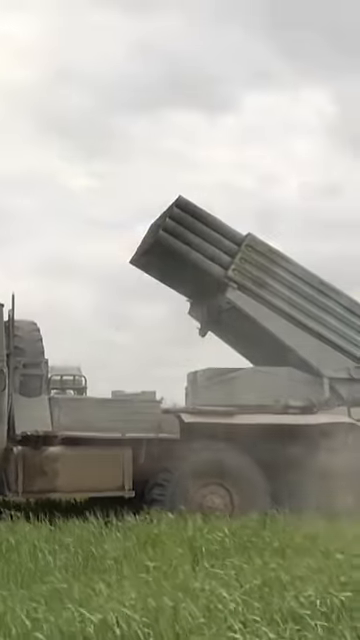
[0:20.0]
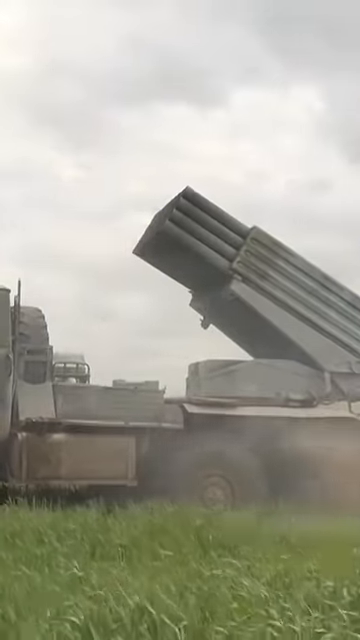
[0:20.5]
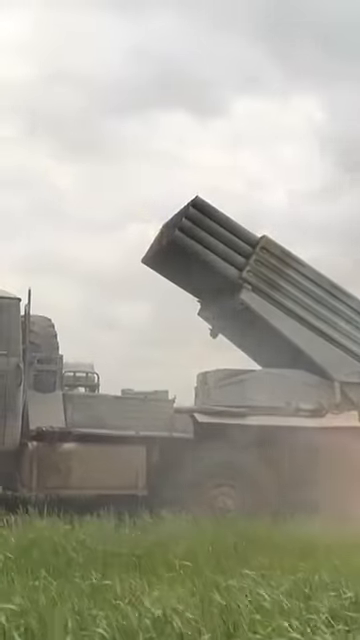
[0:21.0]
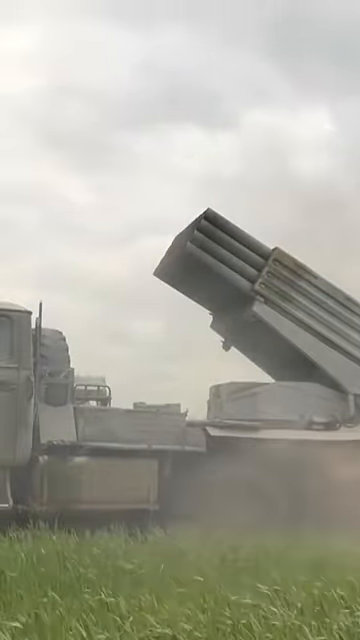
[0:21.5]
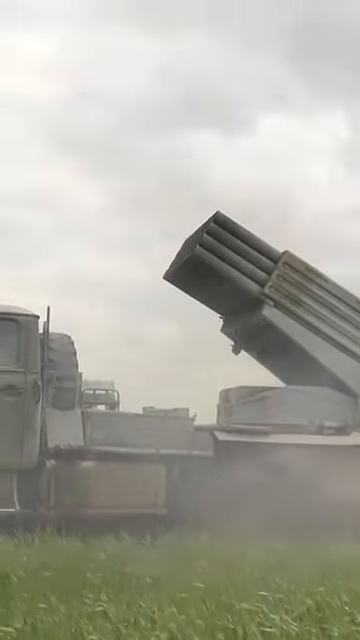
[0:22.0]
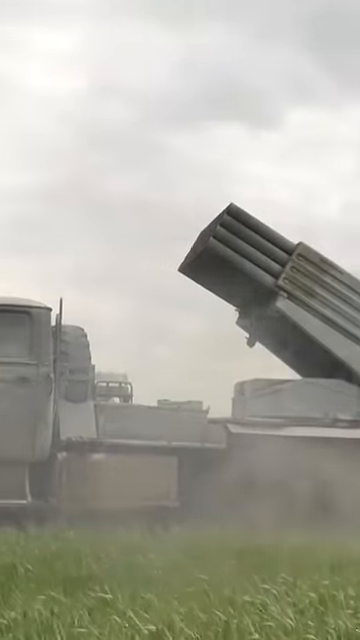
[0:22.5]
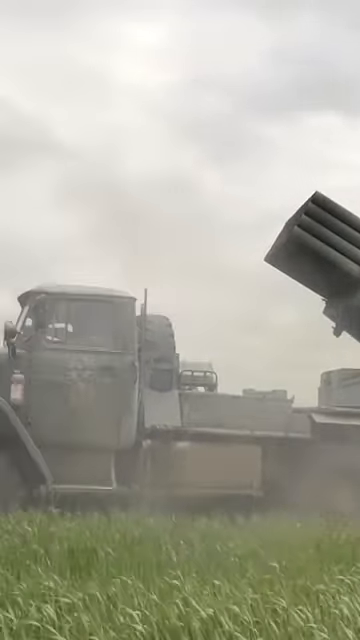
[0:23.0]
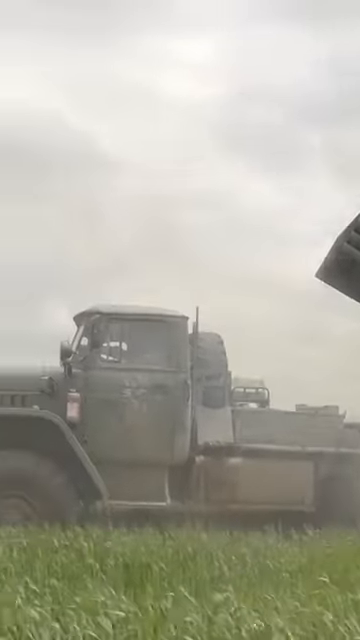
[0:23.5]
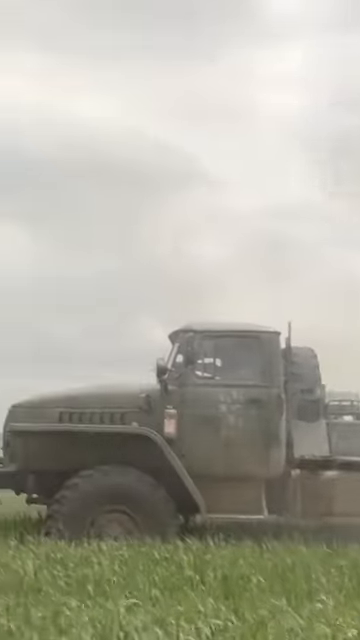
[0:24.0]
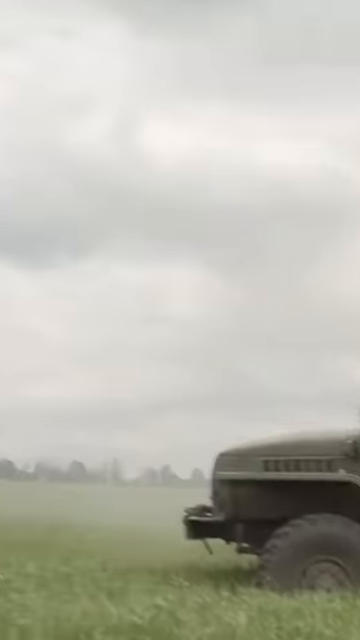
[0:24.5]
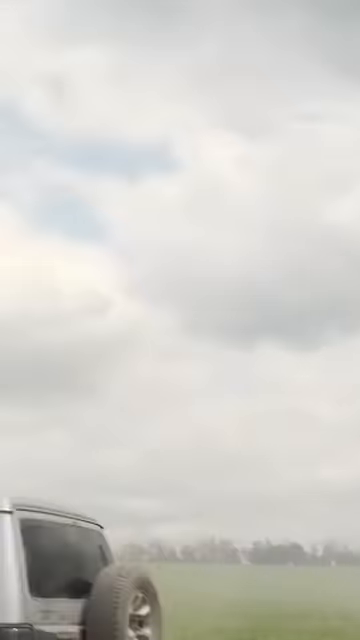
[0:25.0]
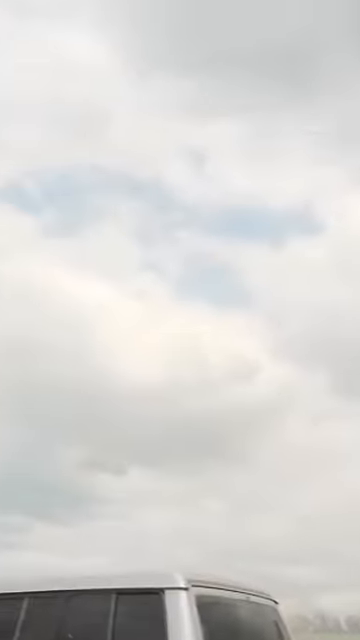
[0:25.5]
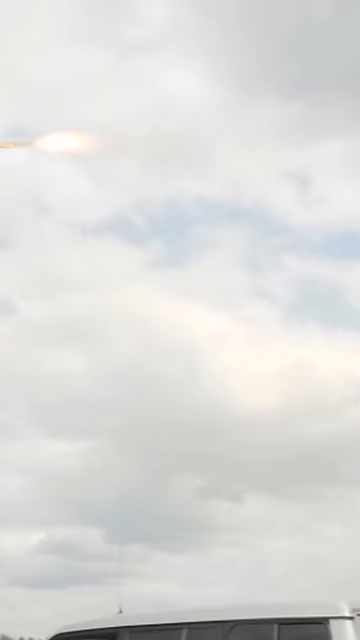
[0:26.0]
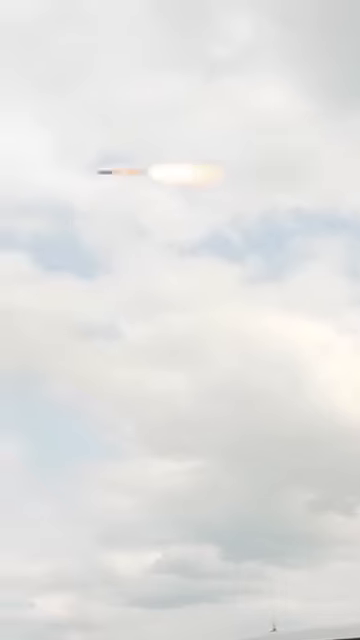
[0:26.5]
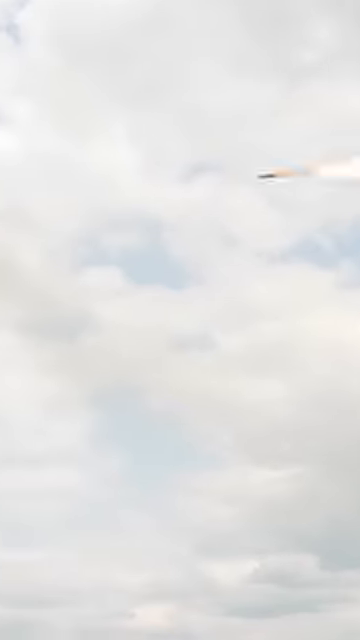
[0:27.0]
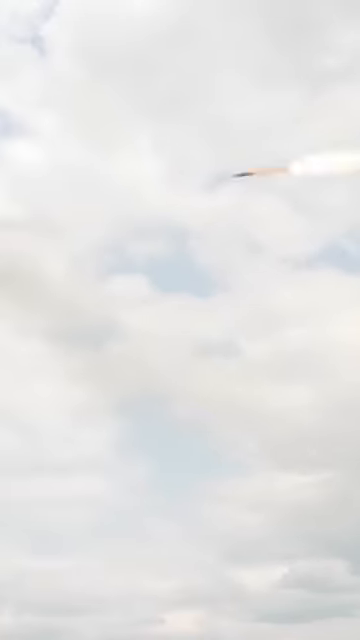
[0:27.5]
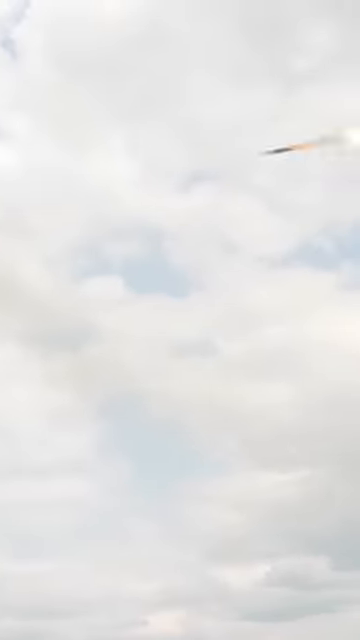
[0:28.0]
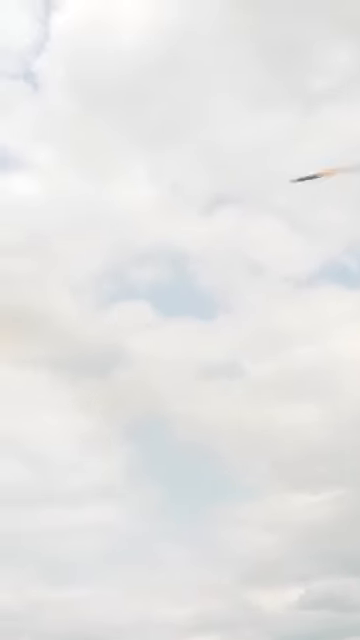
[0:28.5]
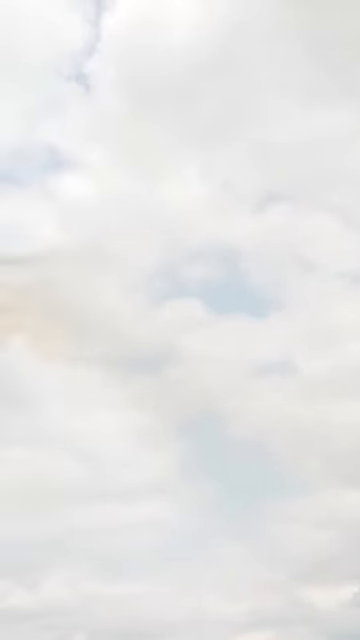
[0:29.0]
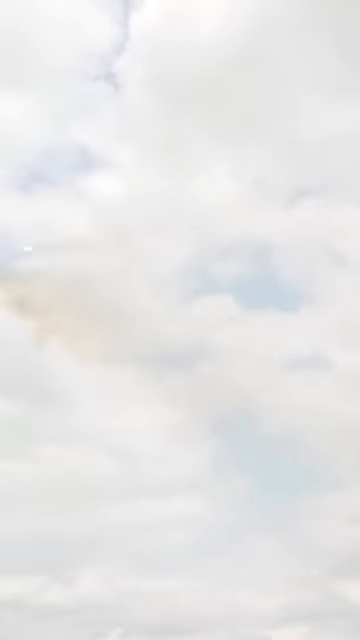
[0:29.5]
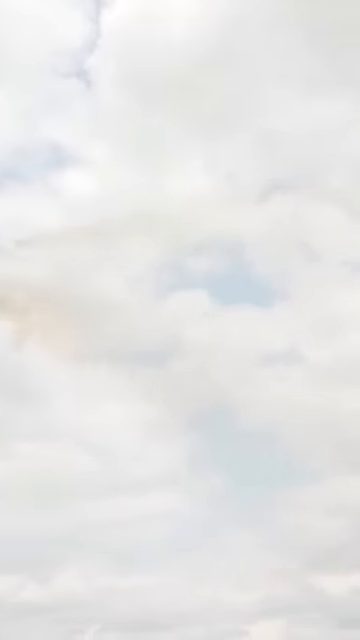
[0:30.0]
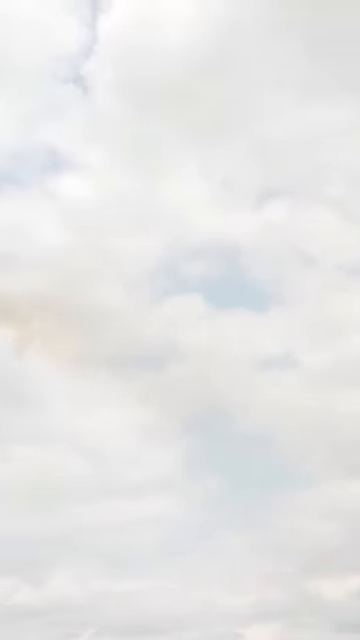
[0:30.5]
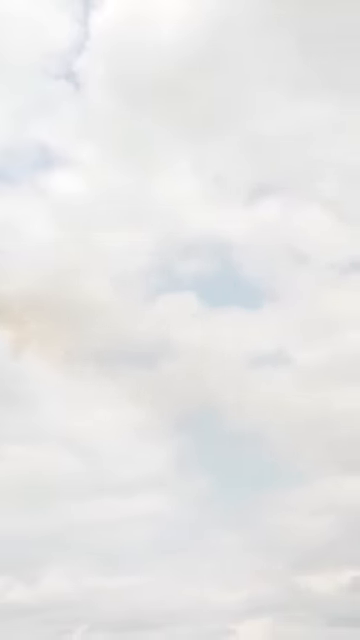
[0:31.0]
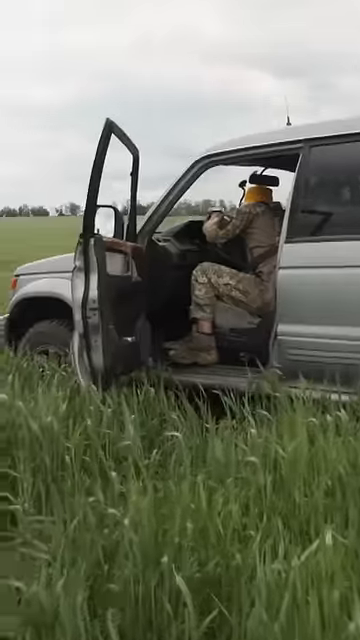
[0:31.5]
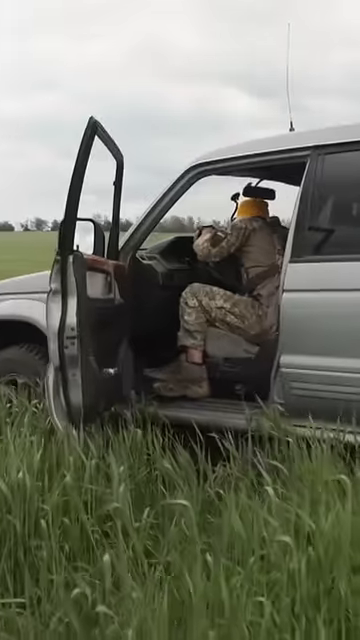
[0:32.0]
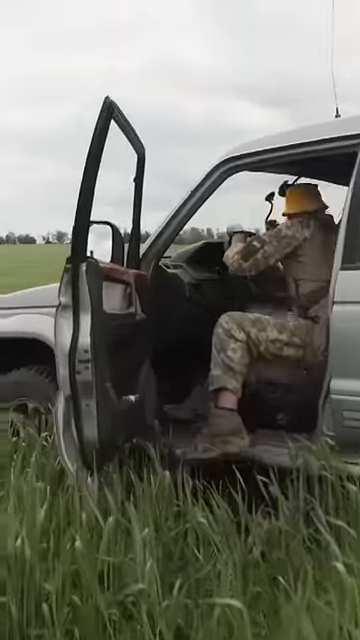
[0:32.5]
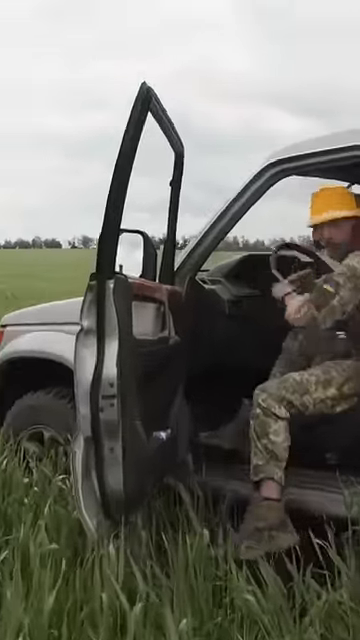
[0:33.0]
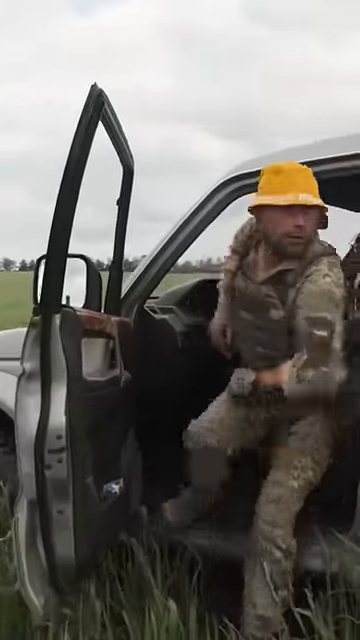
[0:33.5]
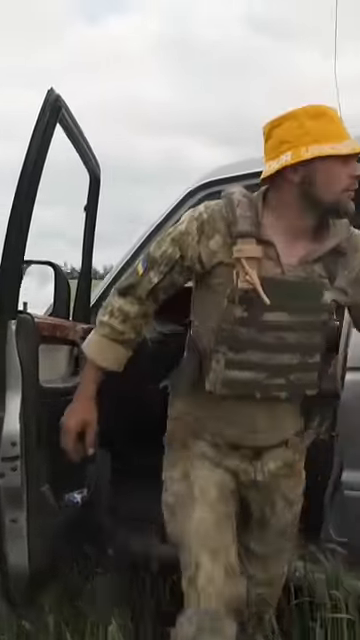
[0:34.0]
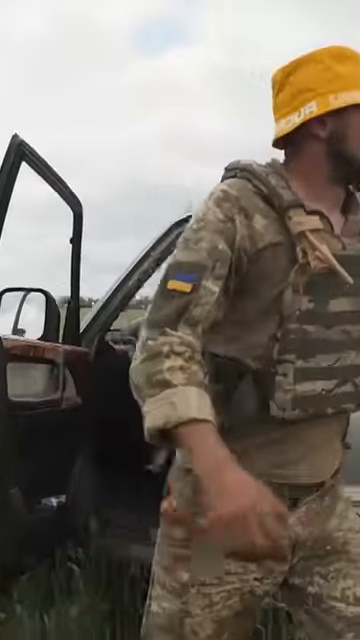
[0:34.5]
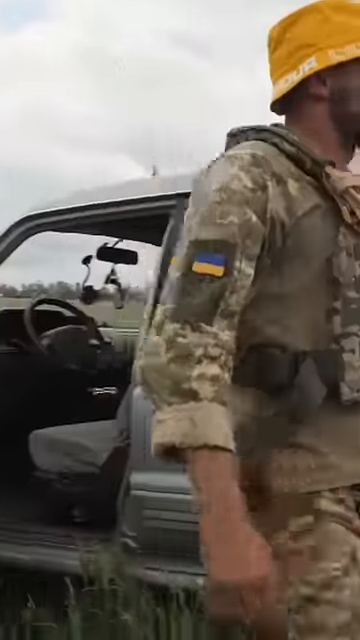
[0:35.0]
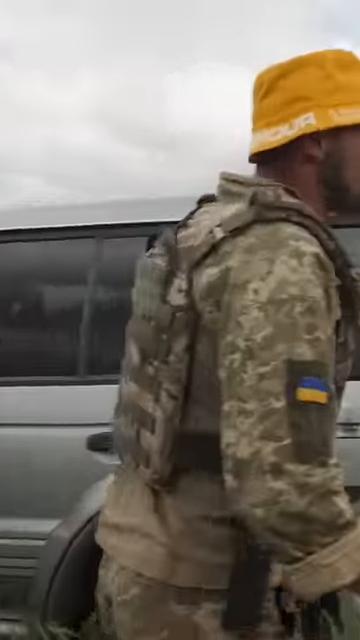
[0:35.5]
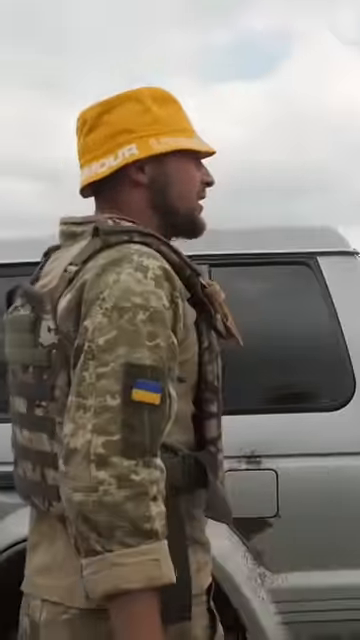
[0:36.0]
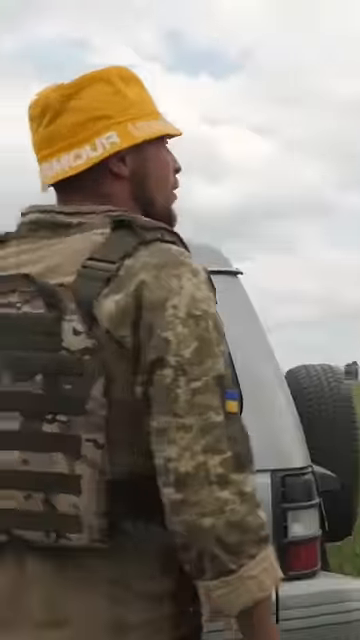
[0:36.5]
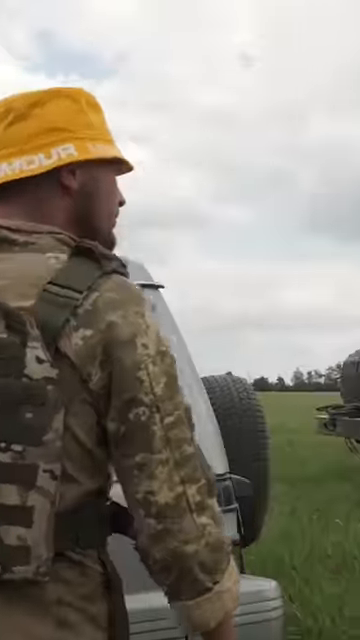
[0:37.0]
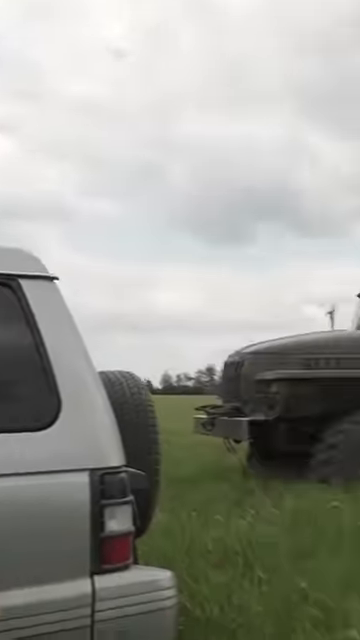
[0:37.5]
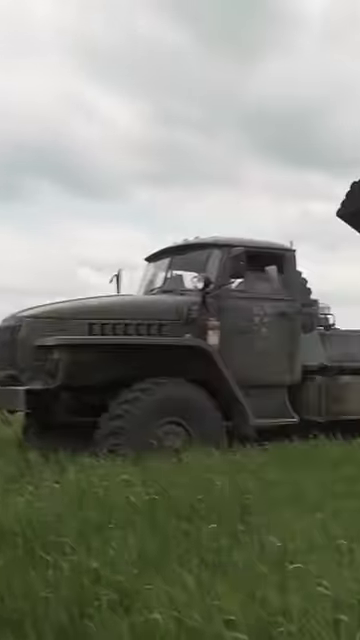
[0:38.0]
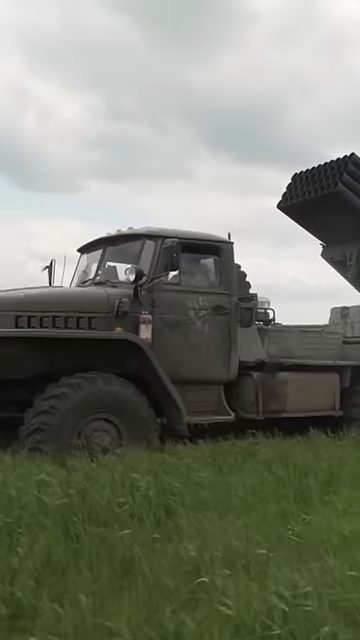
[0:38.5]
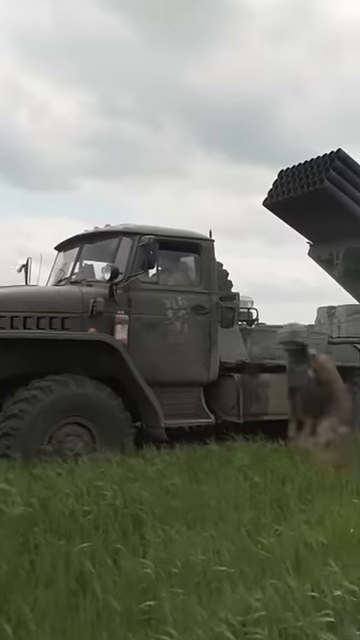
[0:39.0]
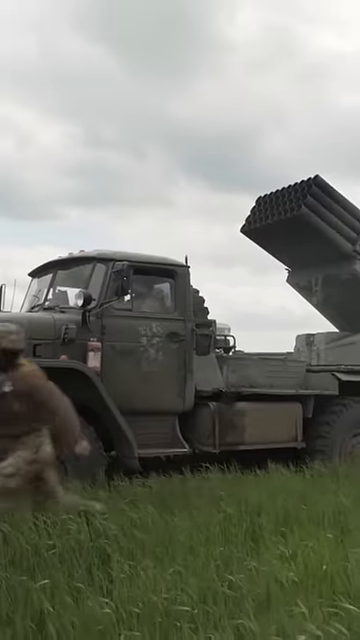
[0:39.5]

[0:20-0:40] Rockets are launched, shooting out of the launcher, and then rockets are seen going into the air and disappearing. A man is in a regular-looking truck wearing an Under Armour hat that does not look very army-like. The setting is outdoors, and the same truck as before has the rocket launcher on it. A bunch of rockets arc into the sky, which is kind of cloudy. Then another army man is seen sitting in a regular civilian-looking truck, wearing a yellow hat that is not very camouflaged. The video is from Sky News, and two people in total appear.